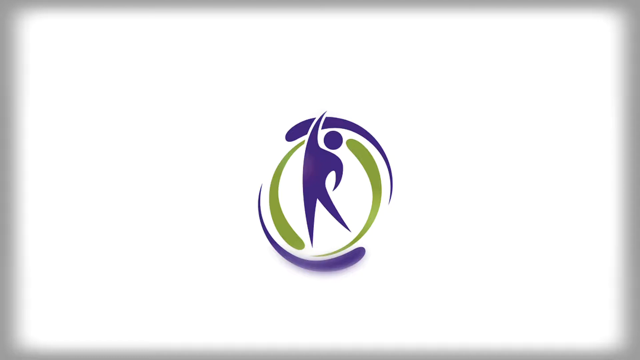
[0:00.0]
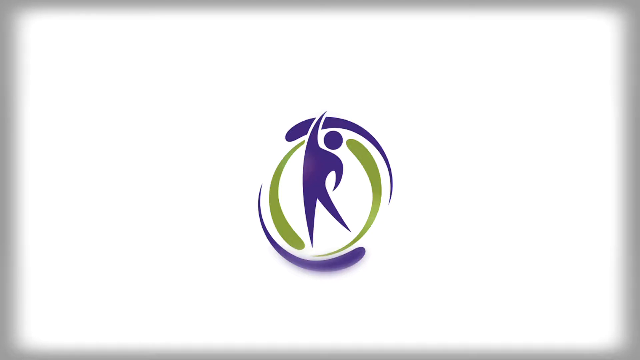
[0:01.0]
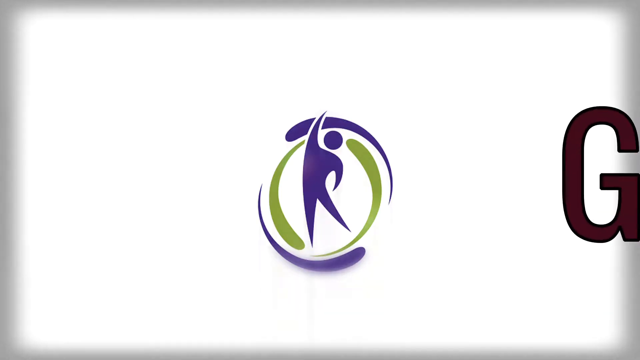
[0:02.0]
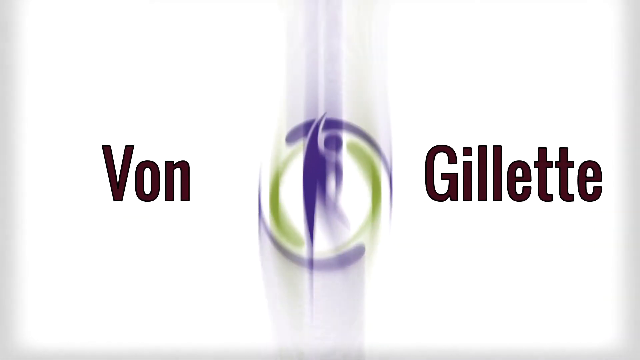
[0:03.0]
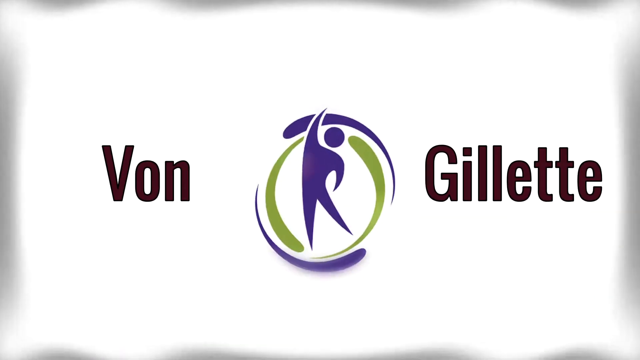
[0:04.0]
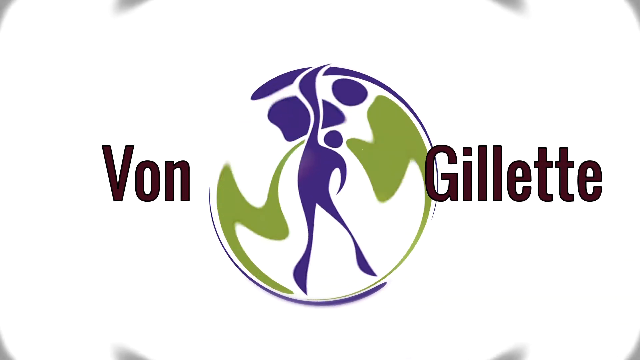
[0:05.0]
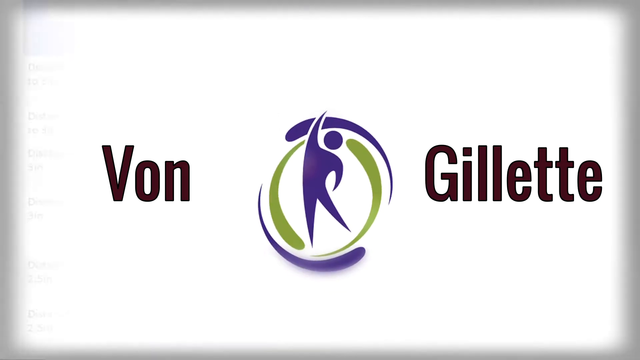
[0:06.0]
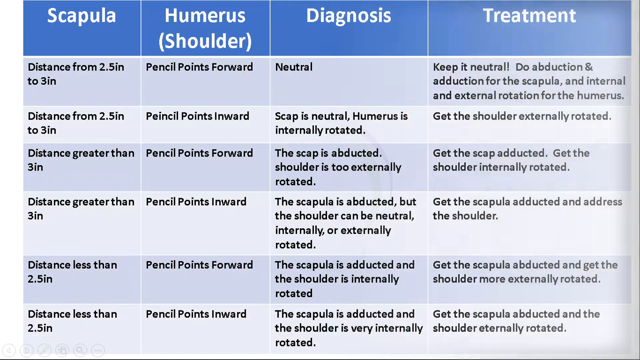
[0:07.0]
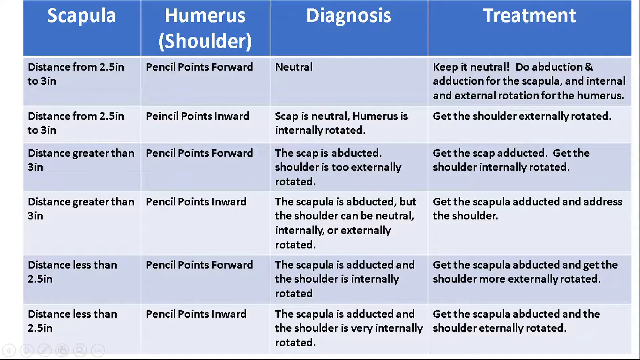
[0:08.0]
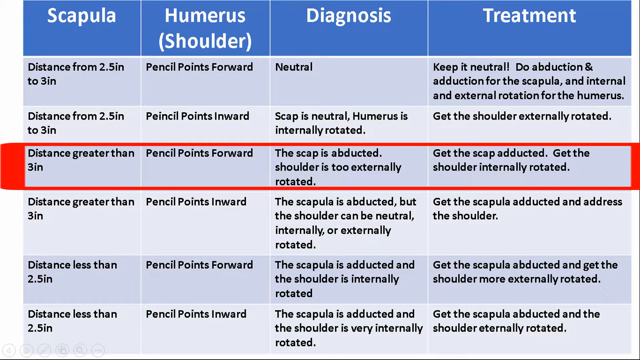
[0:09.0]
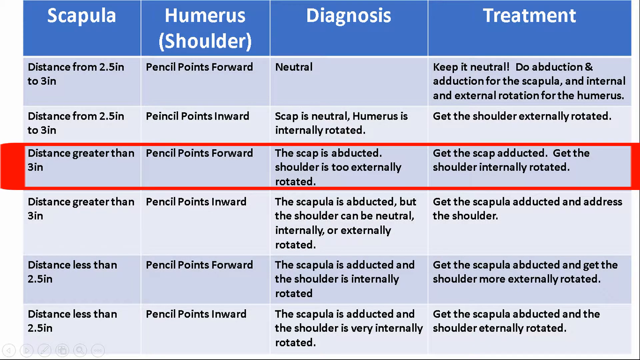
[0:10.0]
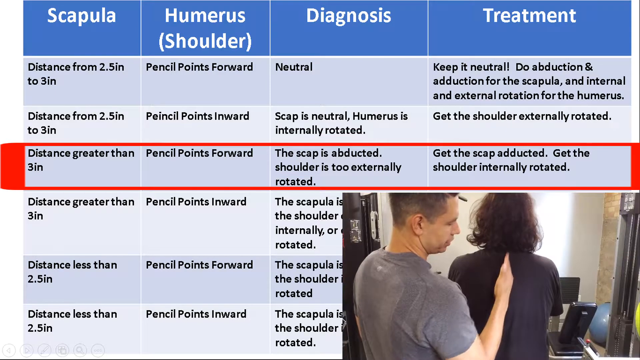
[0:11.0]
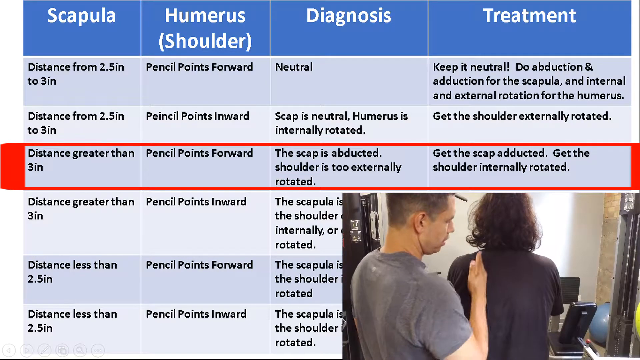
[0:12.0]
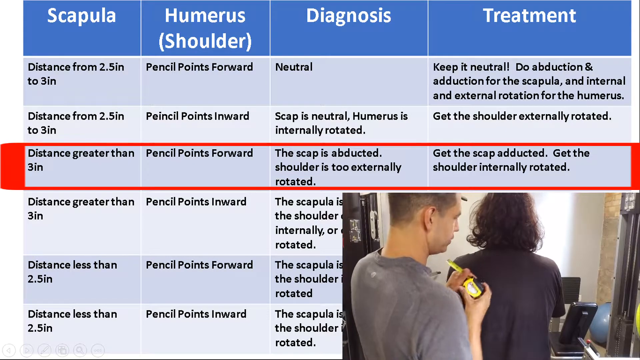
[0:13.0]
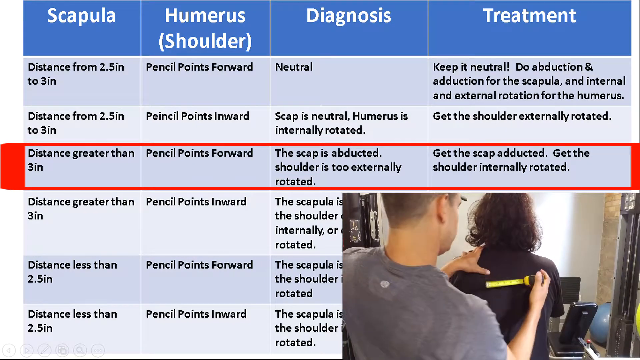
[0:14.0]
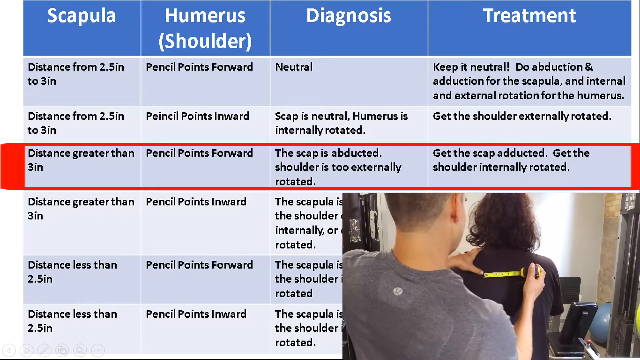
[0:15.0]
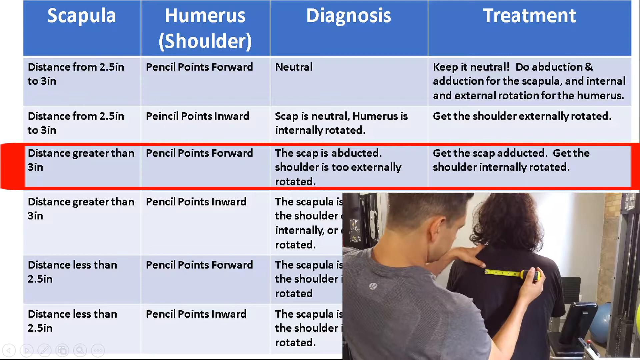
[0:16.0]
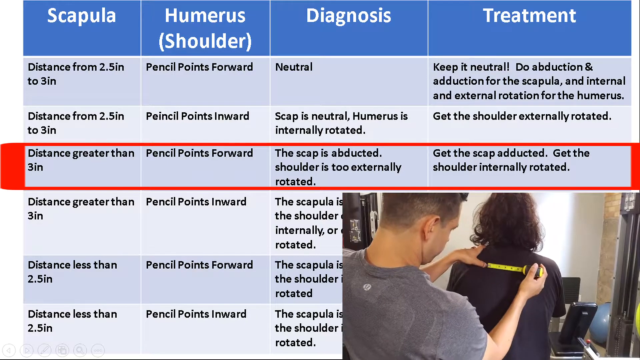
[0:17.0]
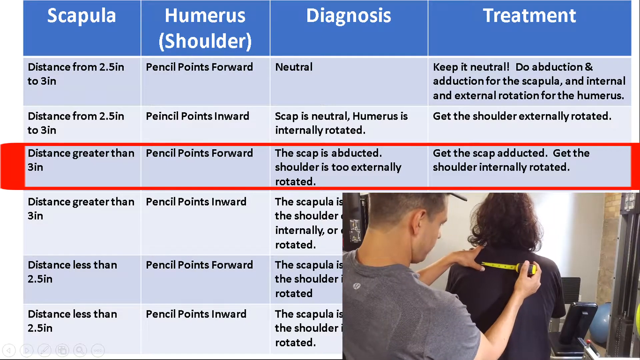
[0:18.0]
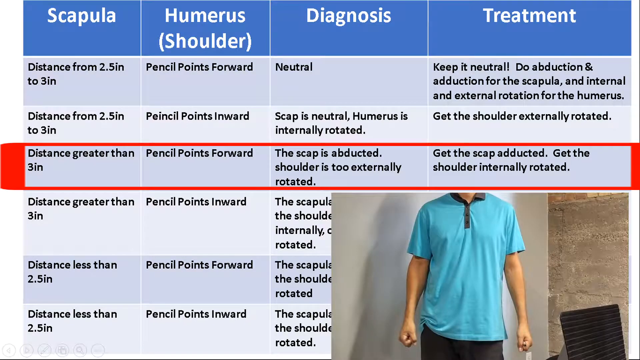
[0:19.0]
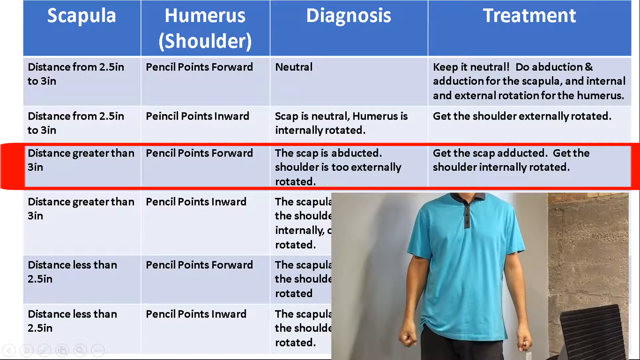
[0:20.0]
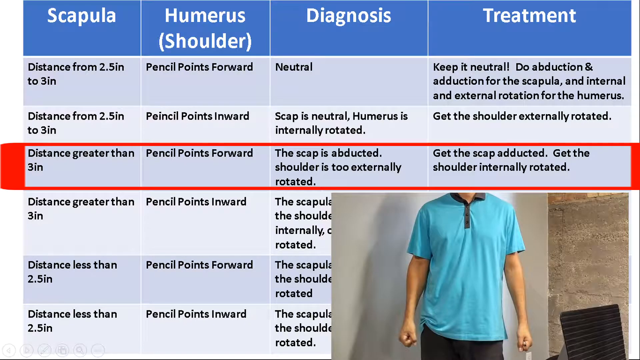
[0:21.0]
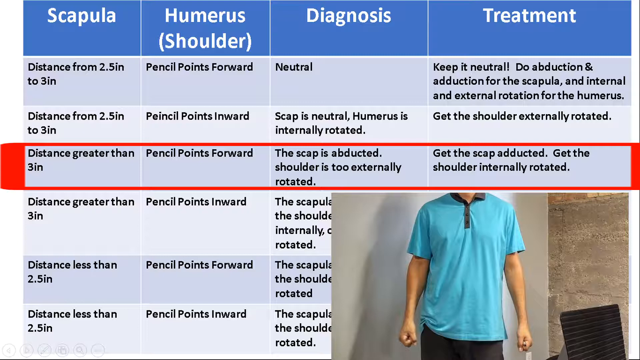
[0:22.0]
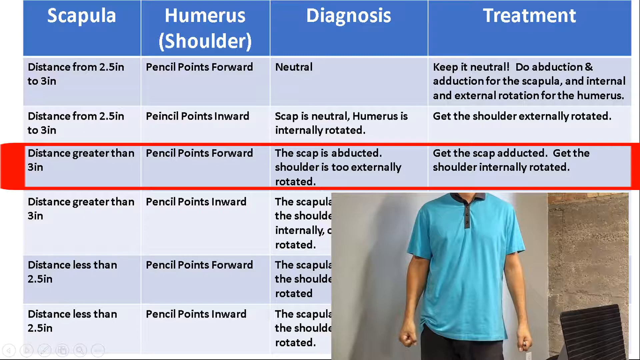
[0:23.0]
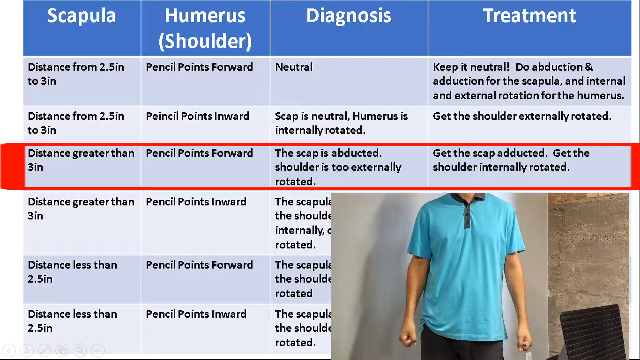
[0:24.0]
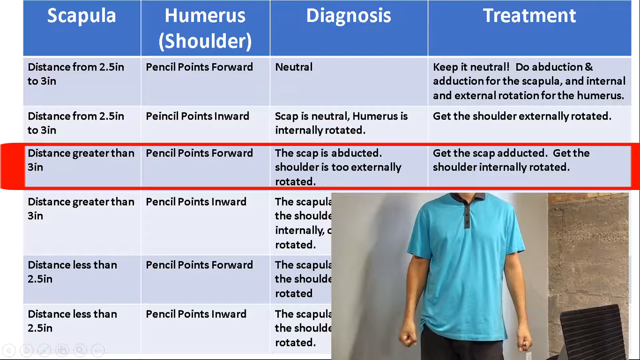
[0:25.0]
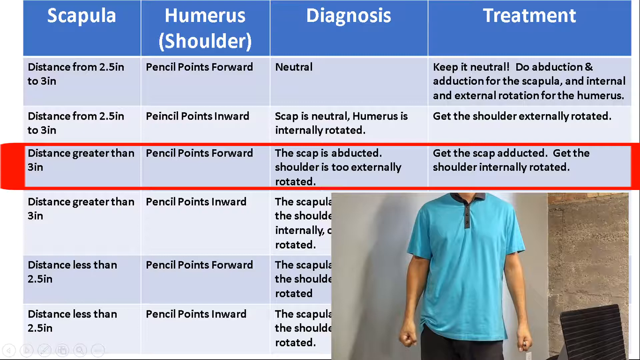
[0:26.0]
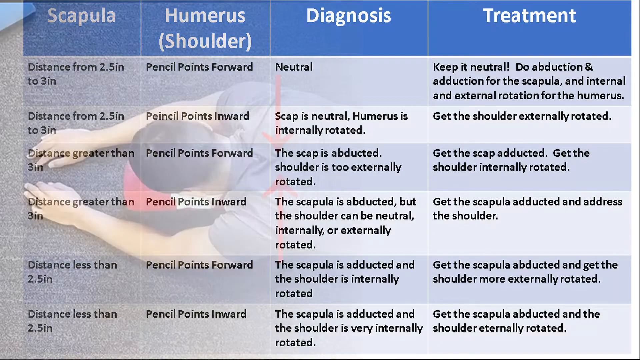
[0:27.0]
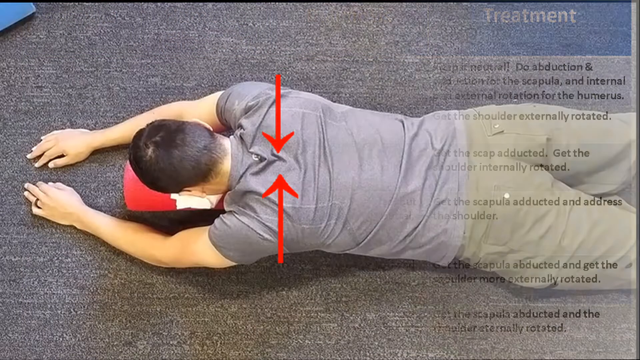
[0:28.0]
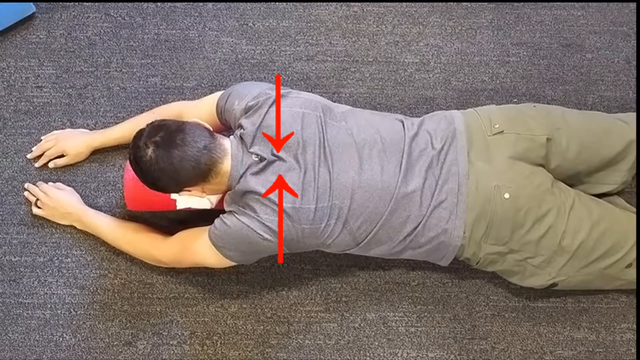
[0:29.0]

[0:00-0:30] A logo of a human character with one arm in the air is in the middle of the screen, with the name "Von" on the left and "Gillette" on the right, against a white background. The scene changes to a chart with four categories across the top: "scapula" in the upper left, "shoulder" to its right, then "diagnosis", and "treatment" on the far right. An area in the middle is highlighted by a red outline and gives instructions on physical therapy for the shoulder. In the bottom right corner, a video shows a man moving his hand in the middle of someone's back, then moving the hand to the left back area. They have a measuring tape and are measuring, massaging the left side of the person's back and holding the measuring tape across the middle of the back. Someone in a blue t-shirt faces the camera. The video disappears, and an image appears of a person lying face down on the ground with red arrows pointing toward the middle of the upper back. Something is on top of the person's face, and their arms are upward on the ground.